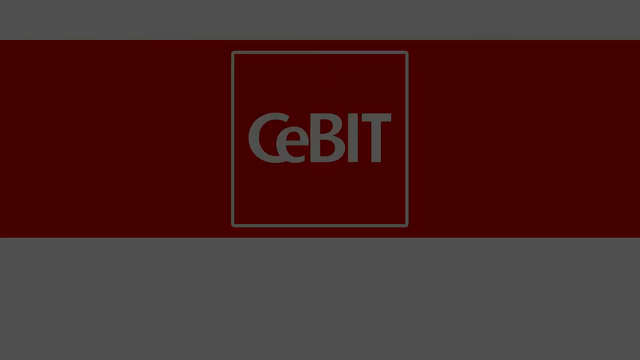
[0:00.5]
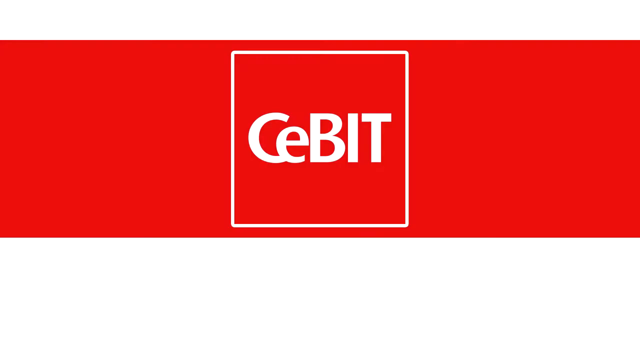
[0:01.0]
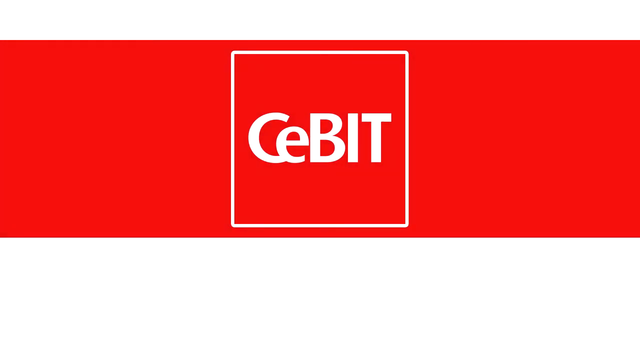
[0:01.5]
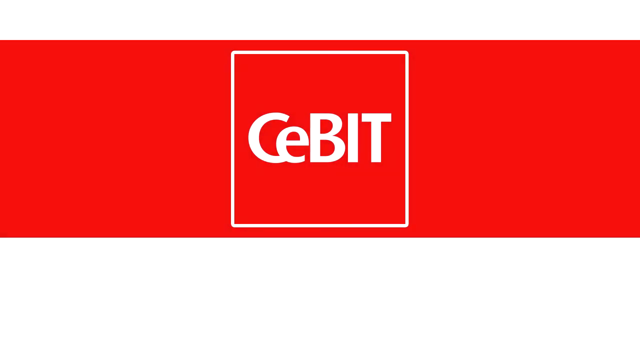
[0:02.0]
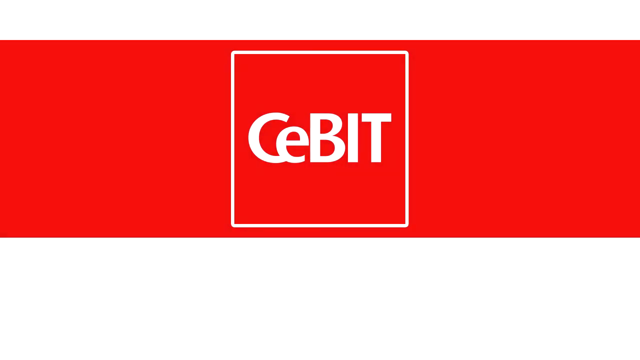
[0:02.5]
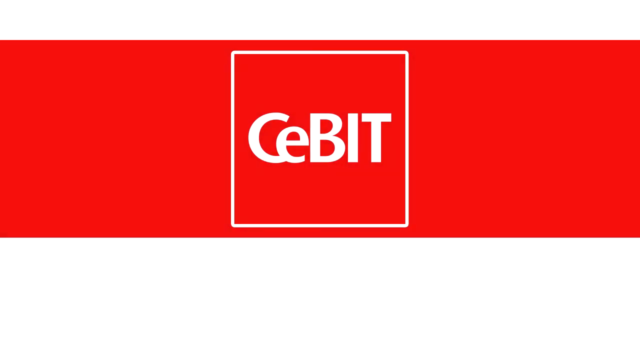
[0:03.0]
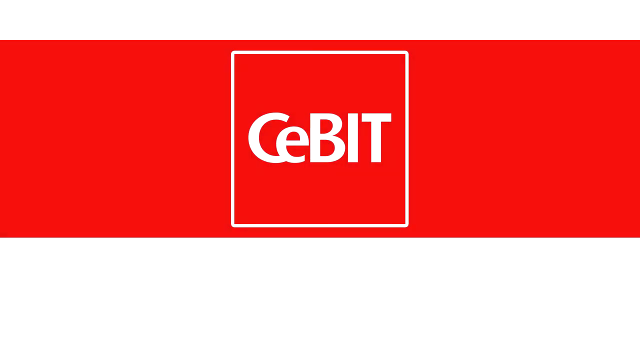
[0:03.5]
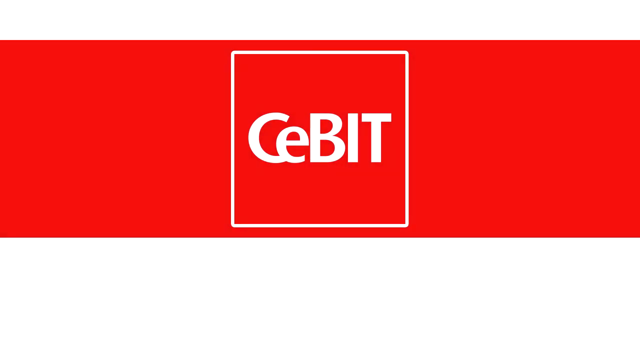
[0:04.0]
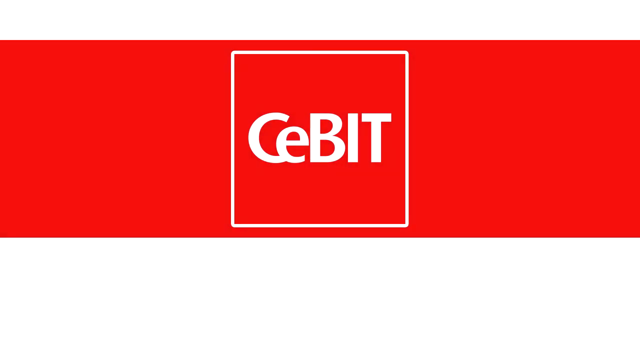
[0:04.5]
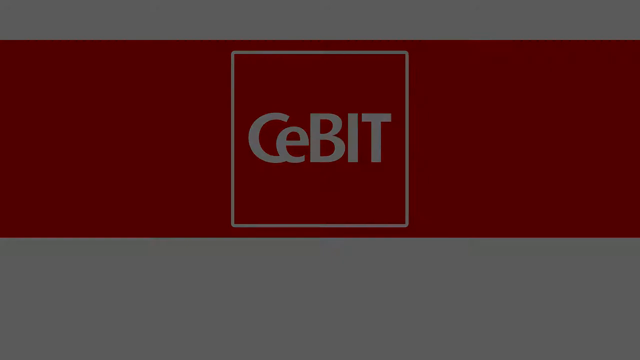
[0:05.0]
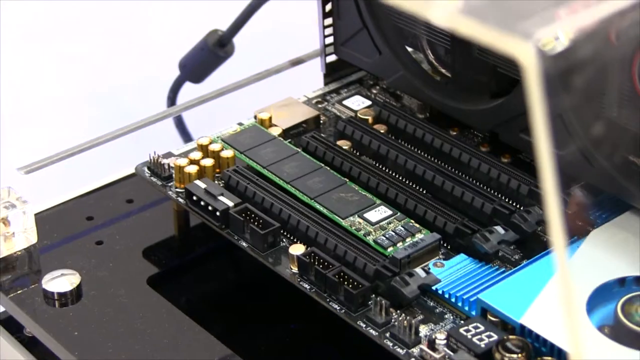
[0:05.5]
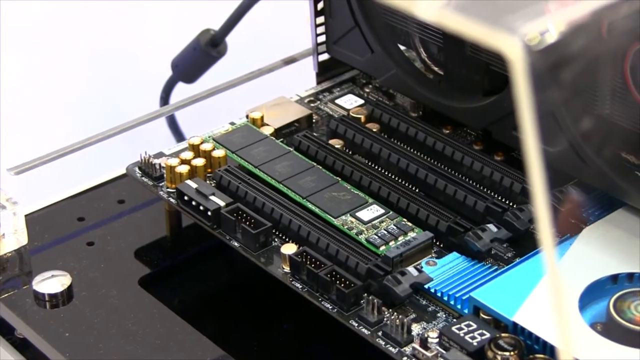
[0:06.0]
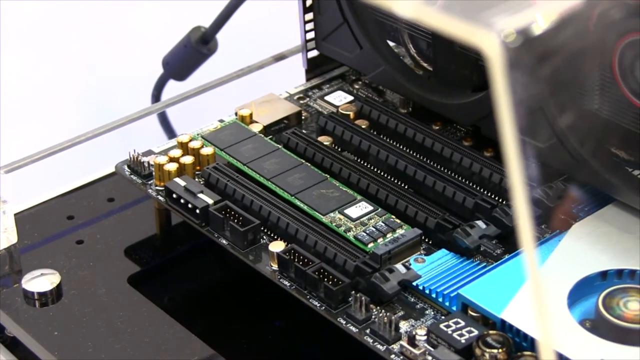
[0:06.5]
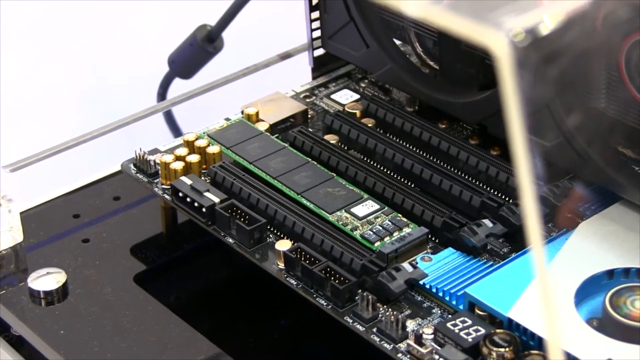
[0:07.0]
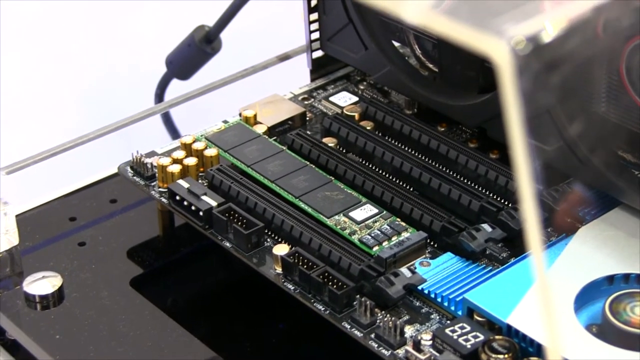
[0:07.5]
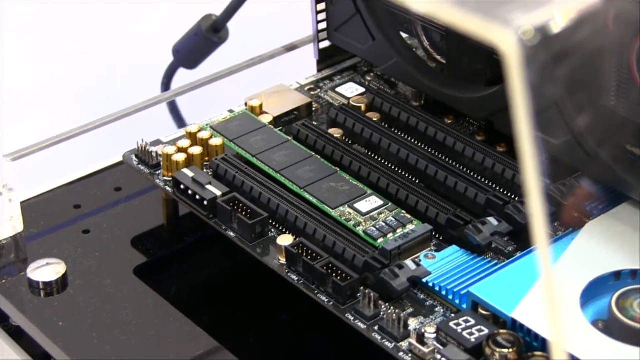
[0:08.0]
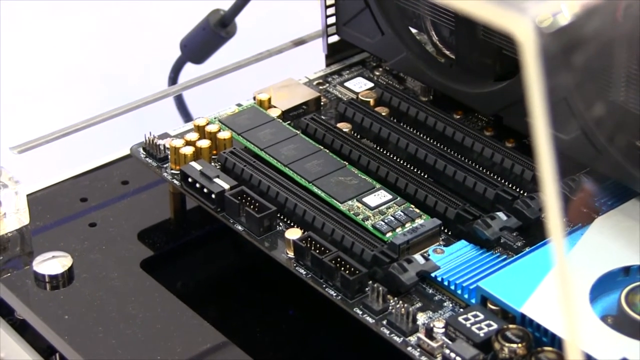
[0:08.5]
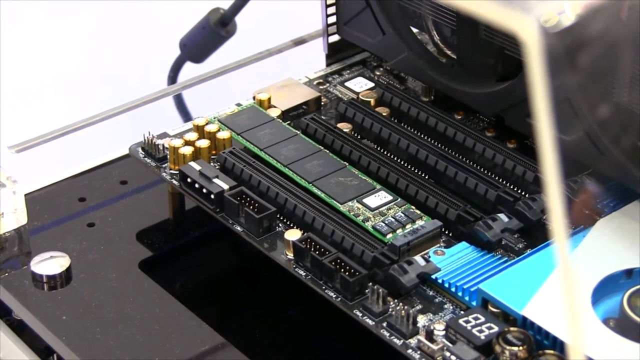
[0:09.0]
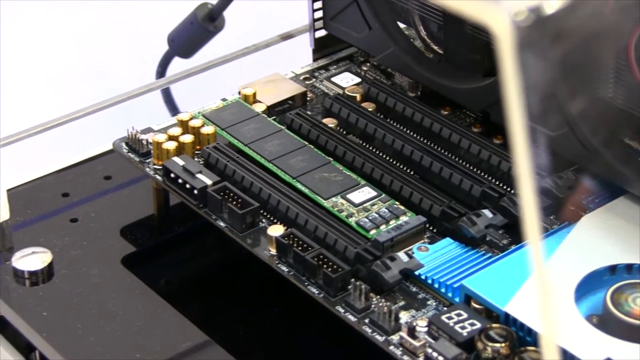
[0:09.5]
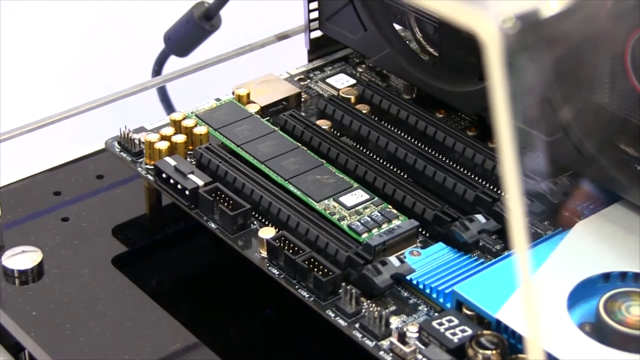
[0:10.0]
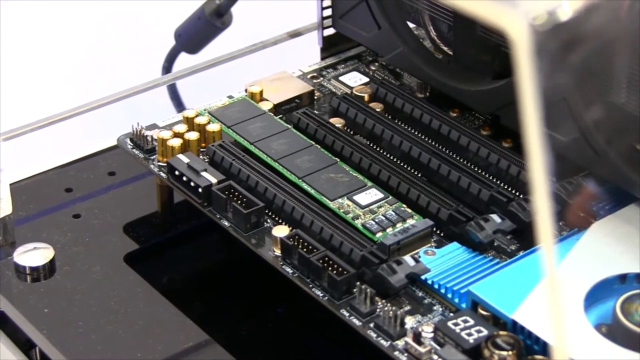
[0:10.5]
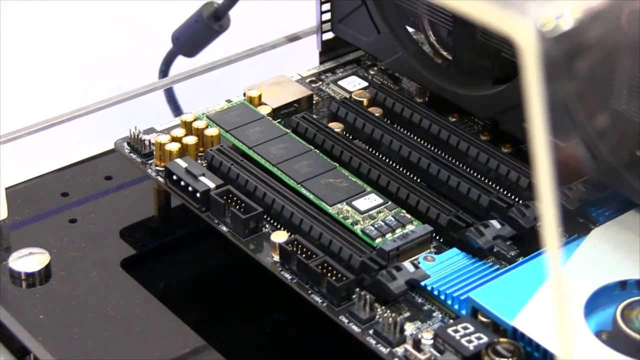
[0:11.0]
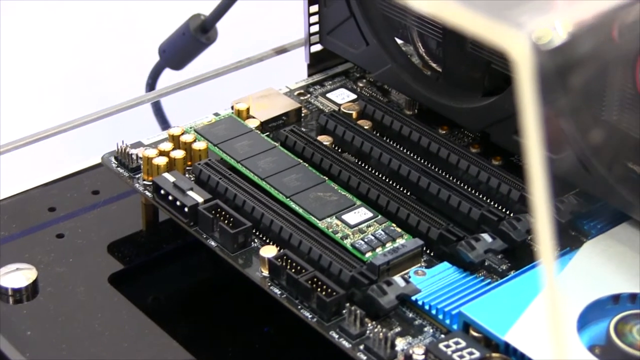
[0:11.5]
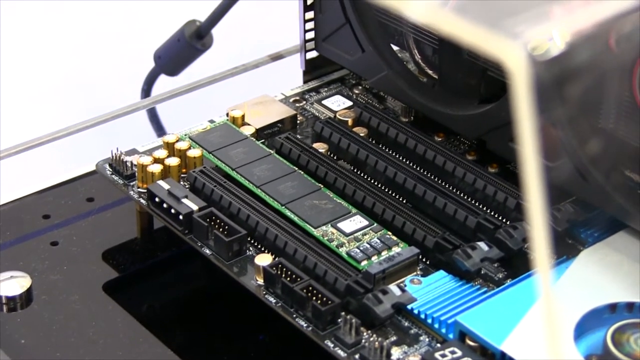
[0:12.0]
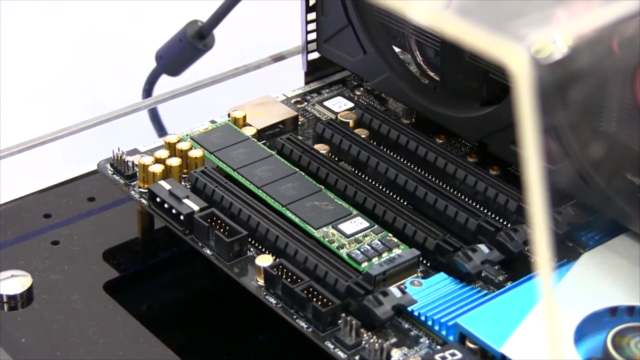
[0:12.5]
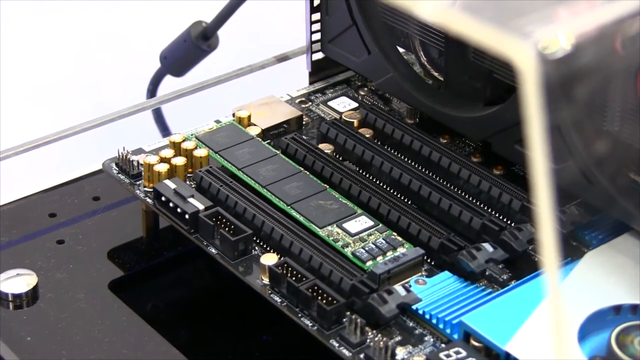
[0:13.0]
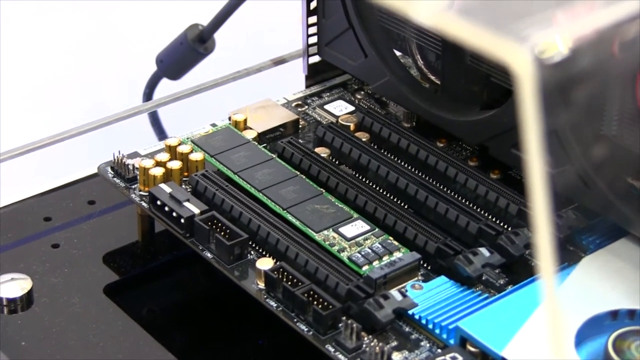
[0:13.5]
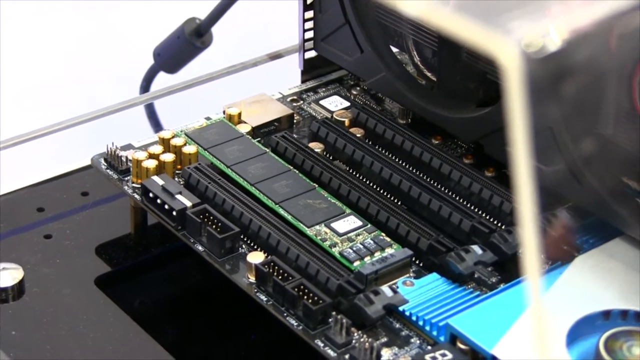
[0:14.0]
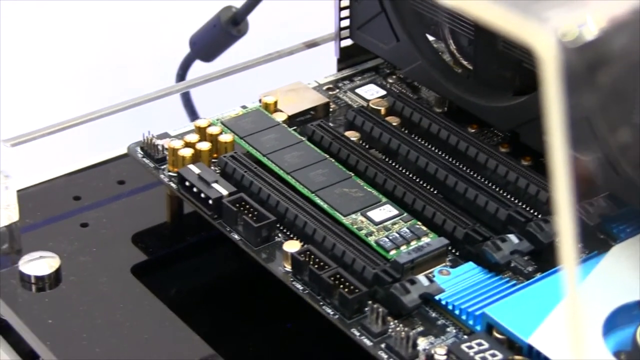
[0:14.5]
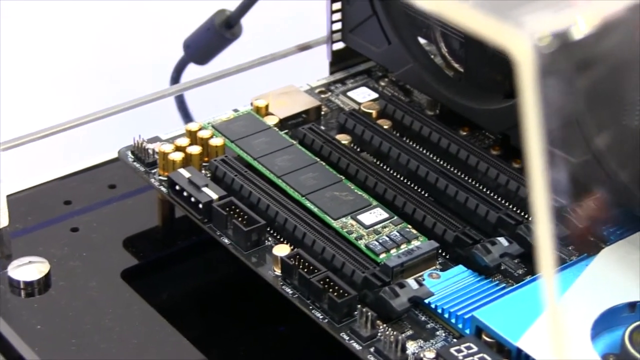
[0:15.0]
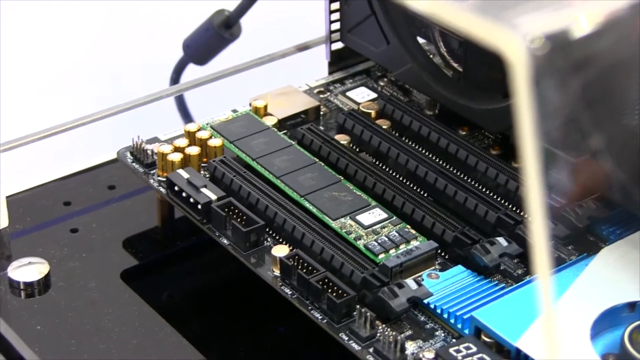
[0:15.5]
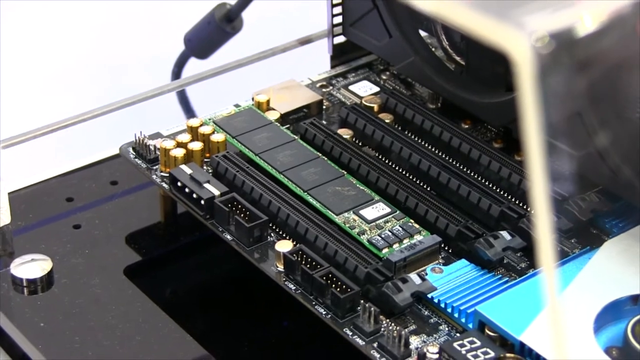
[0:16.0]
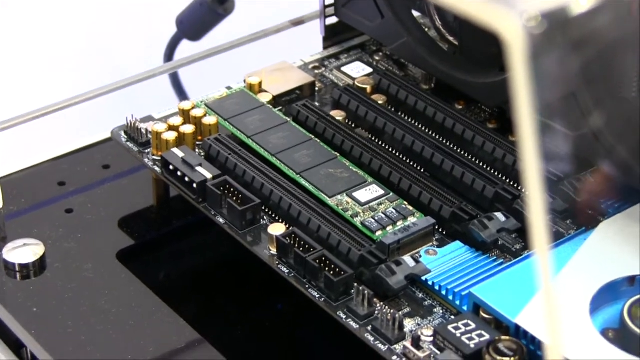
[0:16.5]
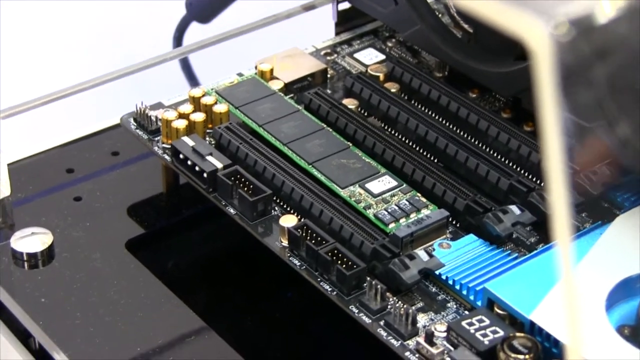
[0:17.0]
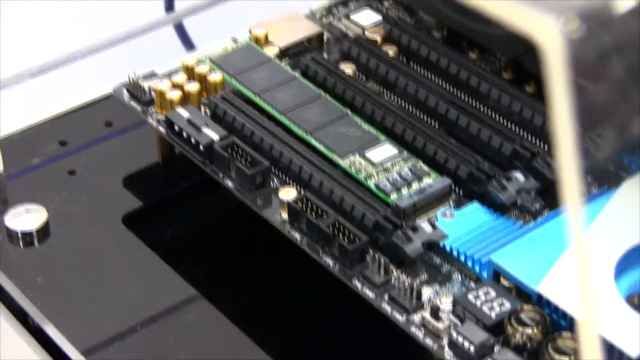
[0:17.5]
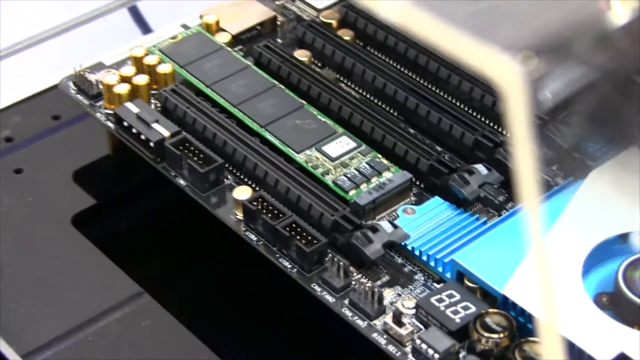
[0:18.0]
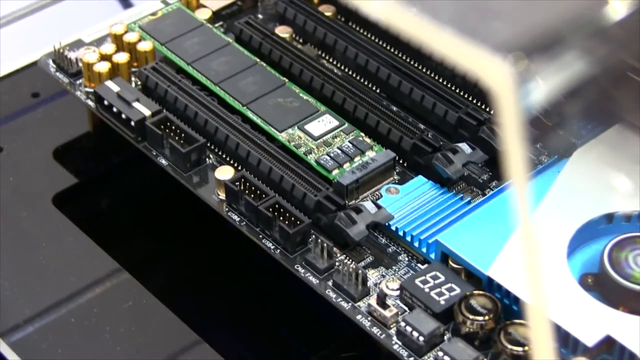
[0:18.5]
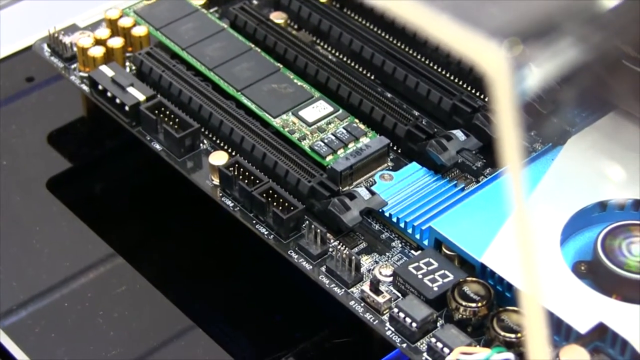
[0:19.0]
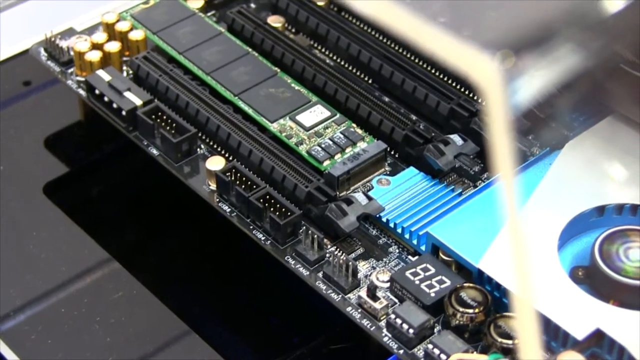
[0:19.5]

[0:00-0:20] The video opens on the word "Cebit" written in big bold white letters on a red surface. It then moves to a computer motherboard with its components visible, including the long RAM slots, the slot where the processor (CPU) is installed, and some heat sinks on the side. Cables hang out of it, and a power cable hangs on the left. On the right side there are some fingers or the shadow of somebody working, moving their fingers slightly, so it looks like someone is trying to fix the board.